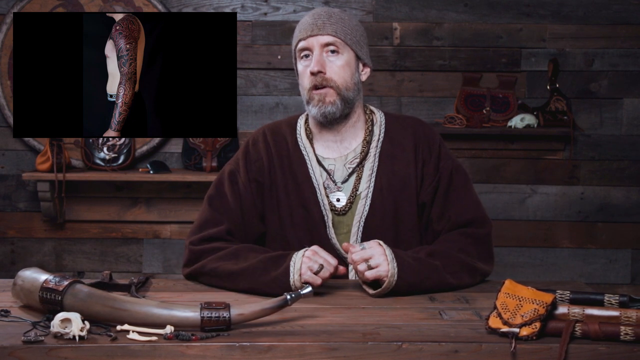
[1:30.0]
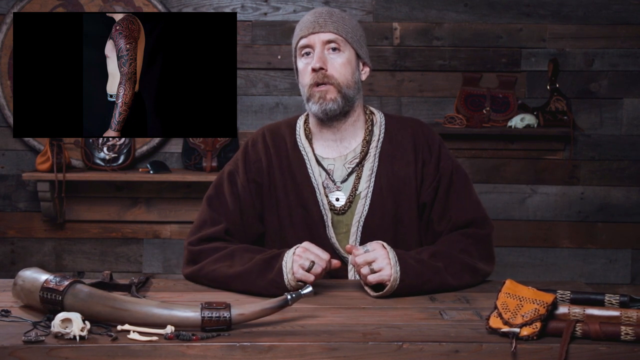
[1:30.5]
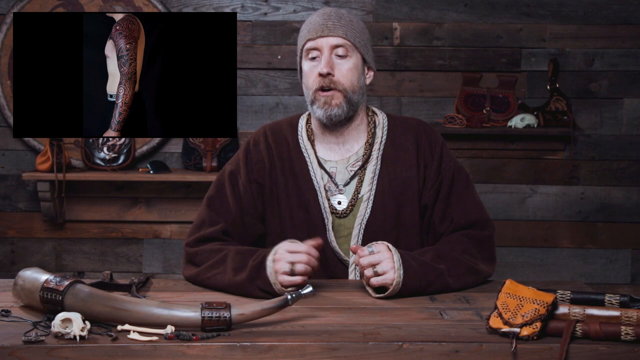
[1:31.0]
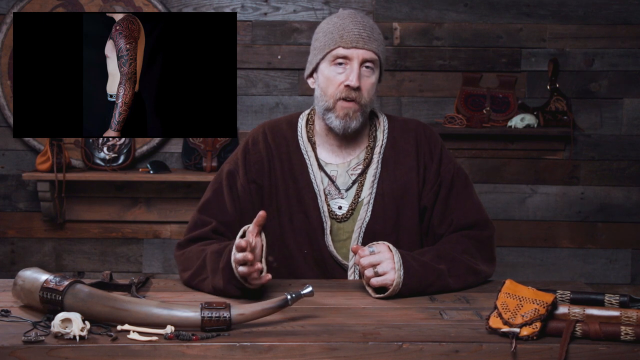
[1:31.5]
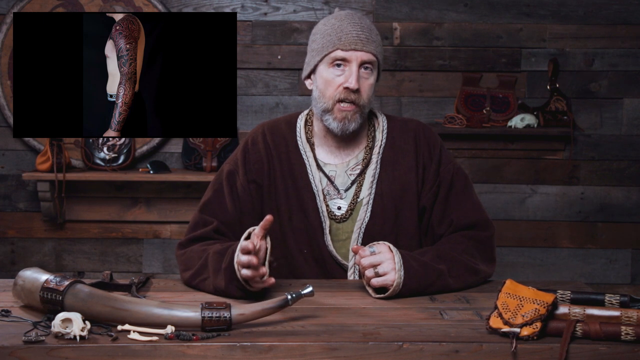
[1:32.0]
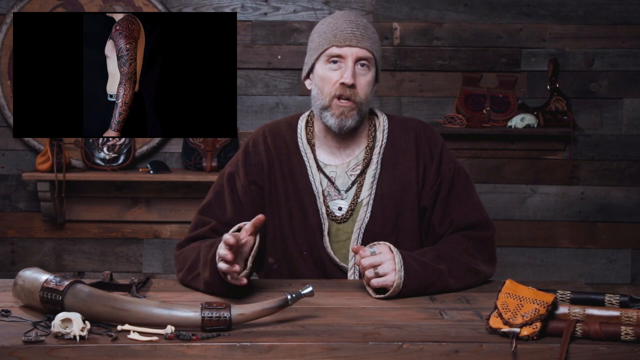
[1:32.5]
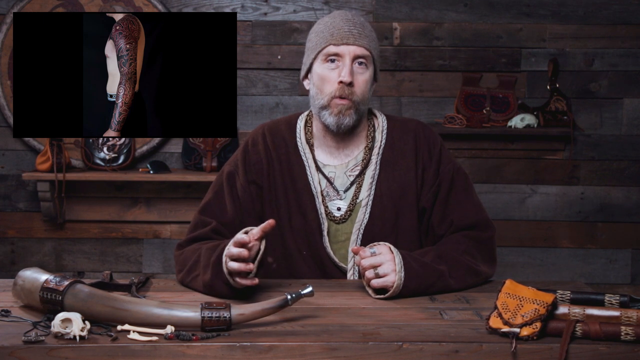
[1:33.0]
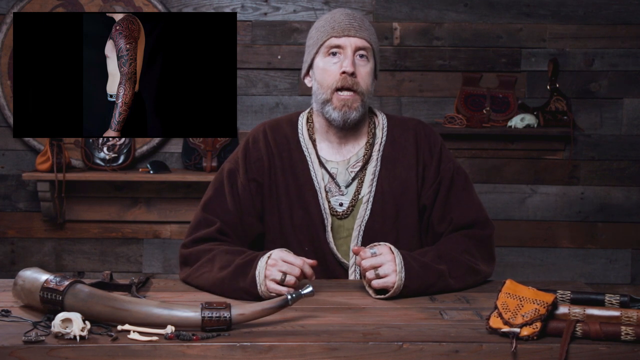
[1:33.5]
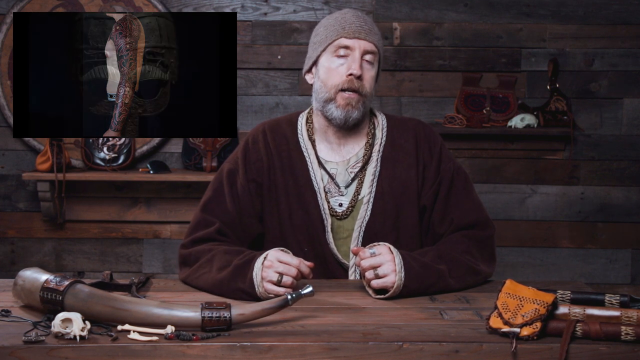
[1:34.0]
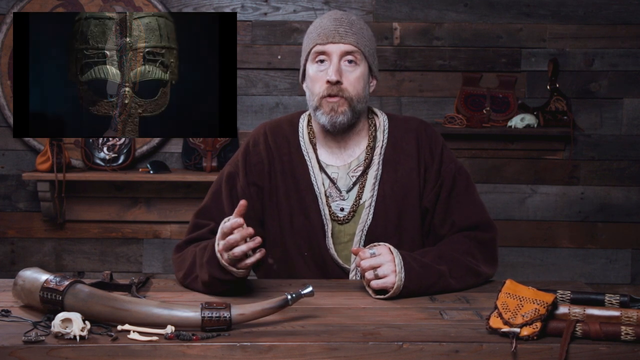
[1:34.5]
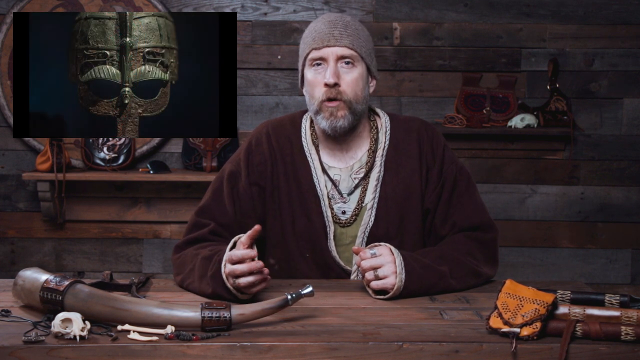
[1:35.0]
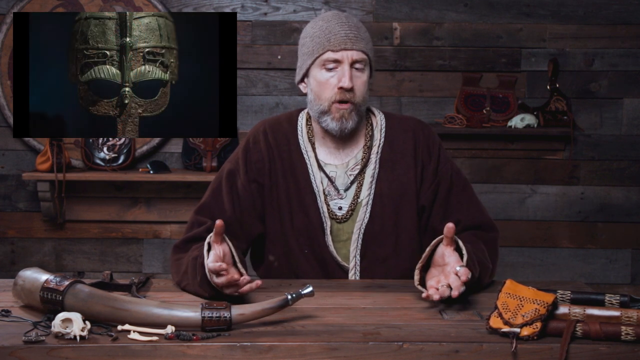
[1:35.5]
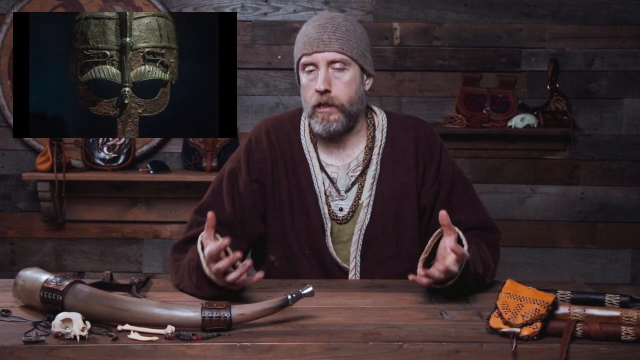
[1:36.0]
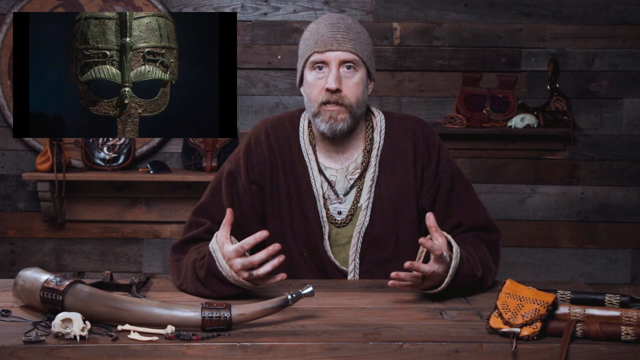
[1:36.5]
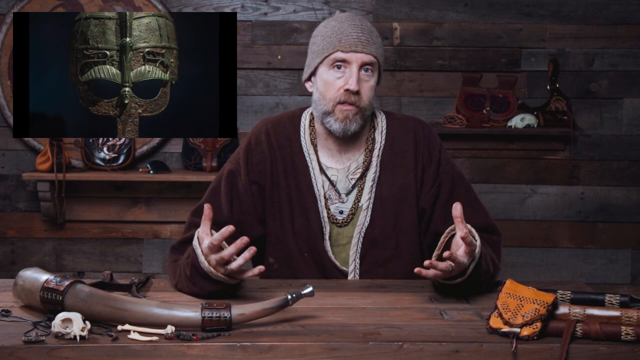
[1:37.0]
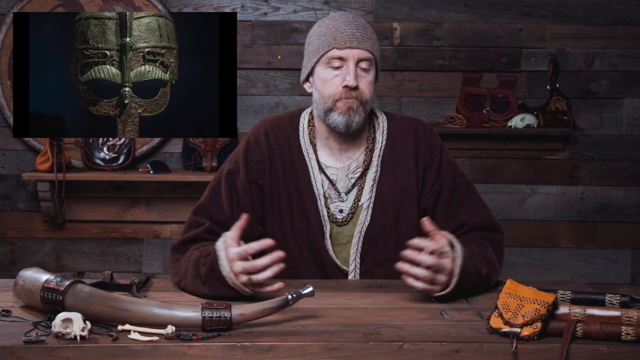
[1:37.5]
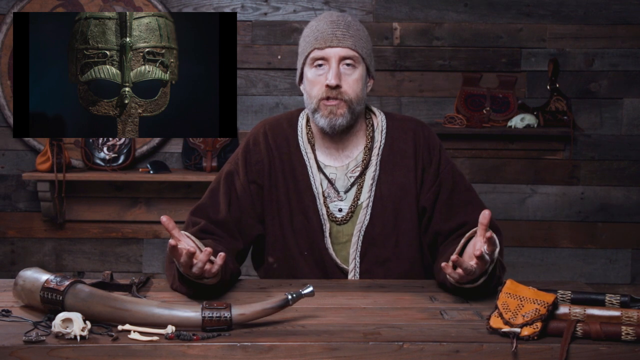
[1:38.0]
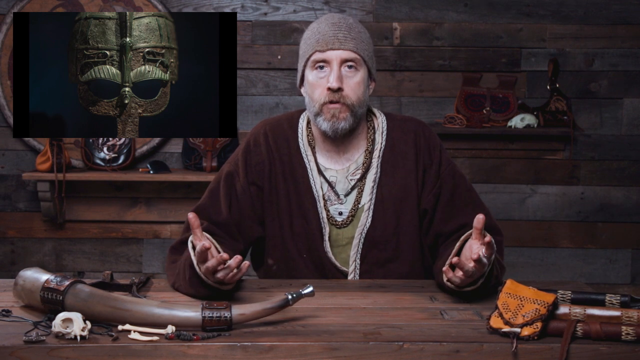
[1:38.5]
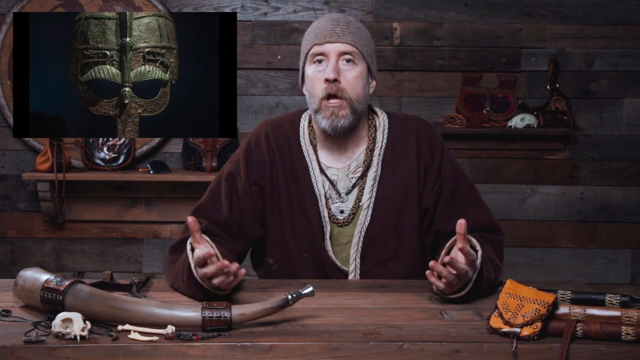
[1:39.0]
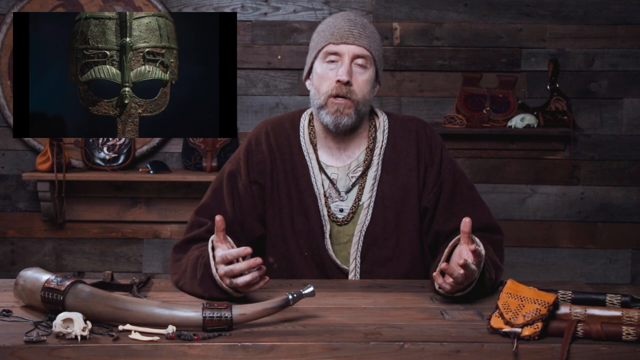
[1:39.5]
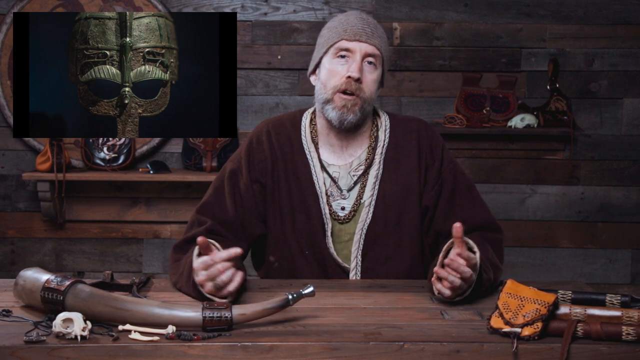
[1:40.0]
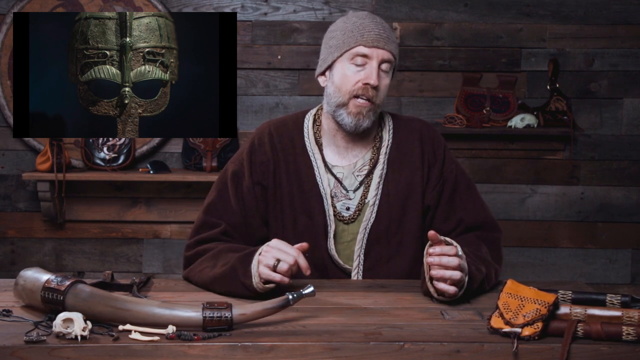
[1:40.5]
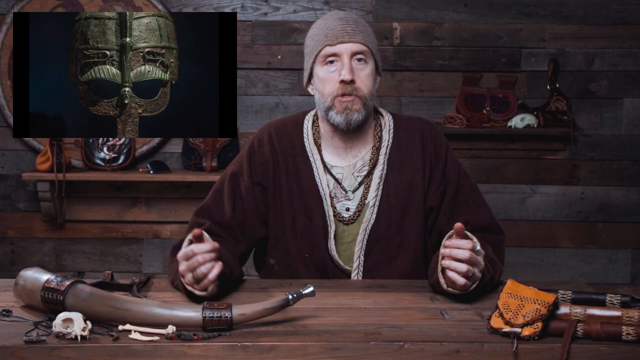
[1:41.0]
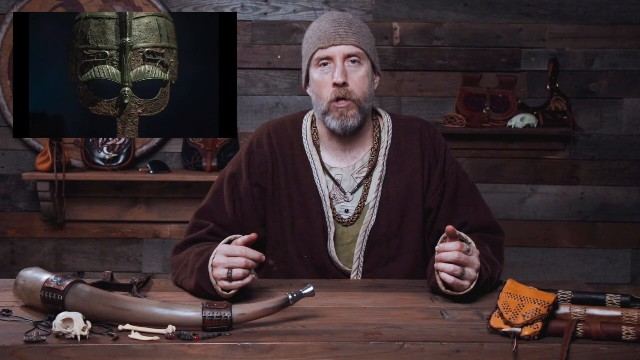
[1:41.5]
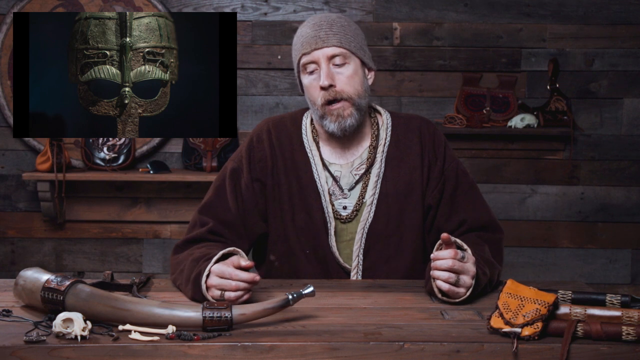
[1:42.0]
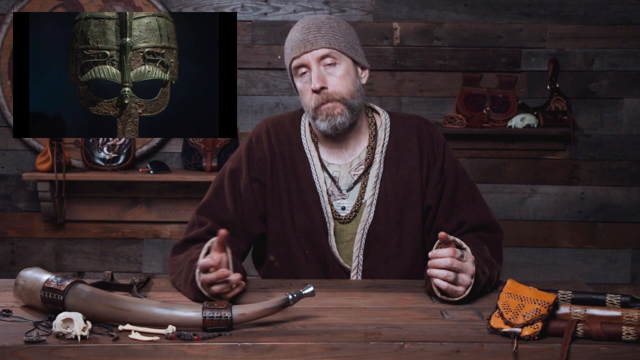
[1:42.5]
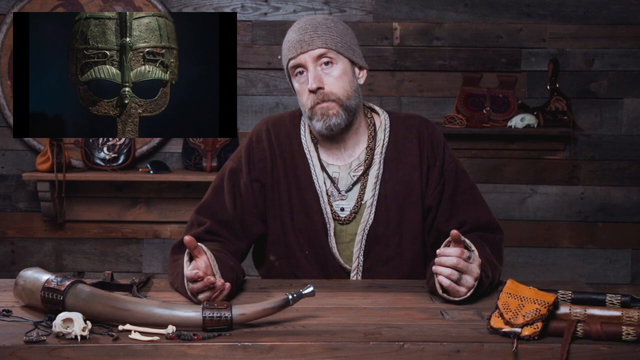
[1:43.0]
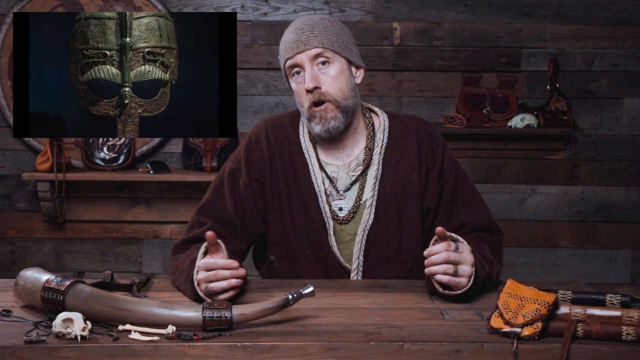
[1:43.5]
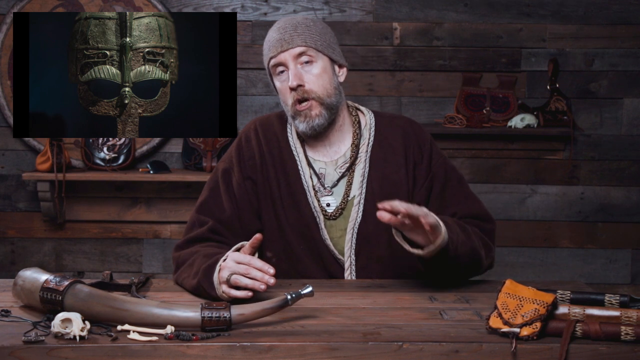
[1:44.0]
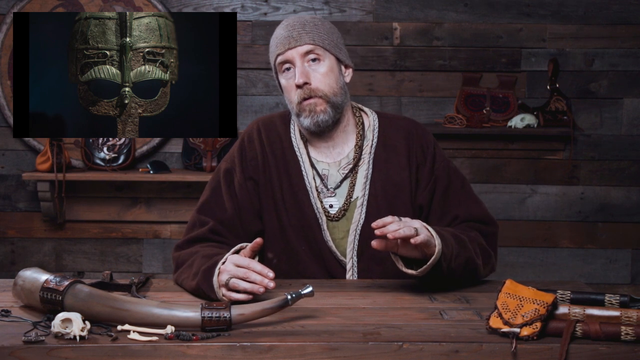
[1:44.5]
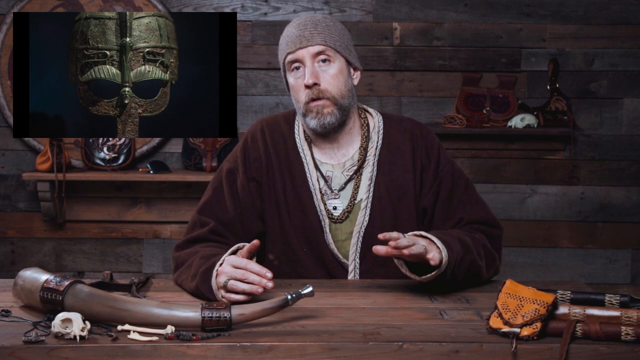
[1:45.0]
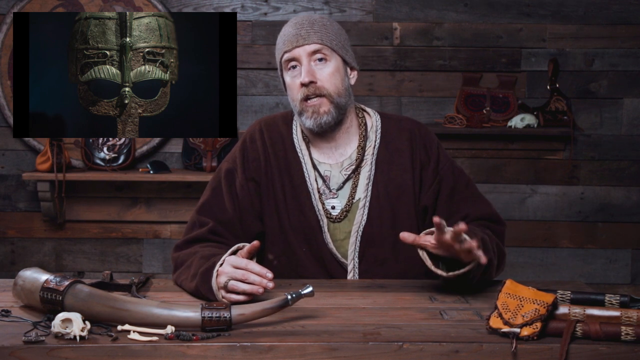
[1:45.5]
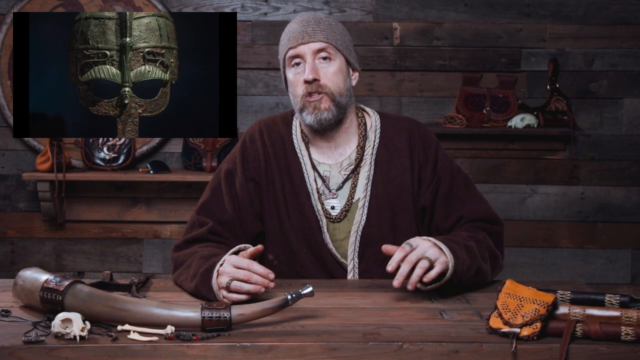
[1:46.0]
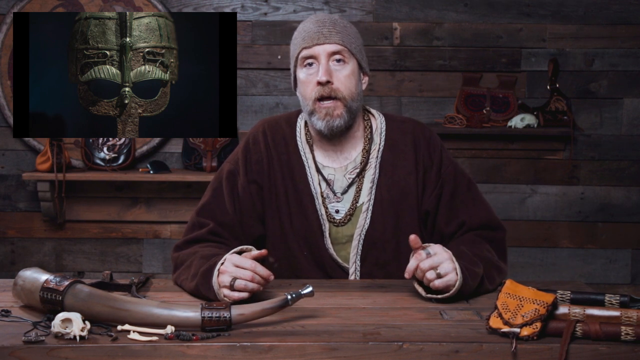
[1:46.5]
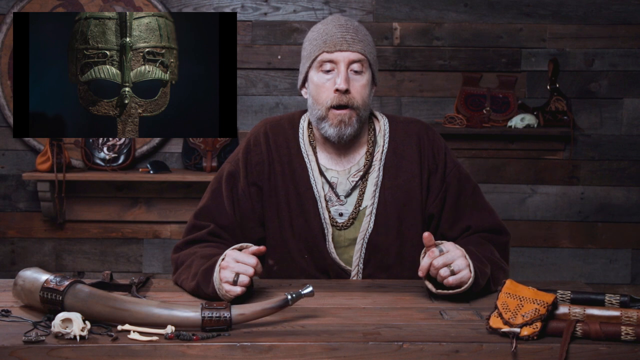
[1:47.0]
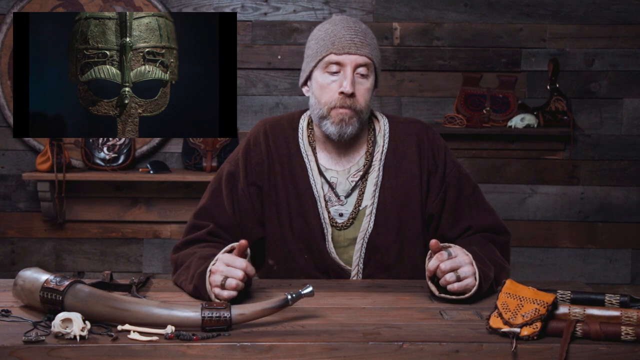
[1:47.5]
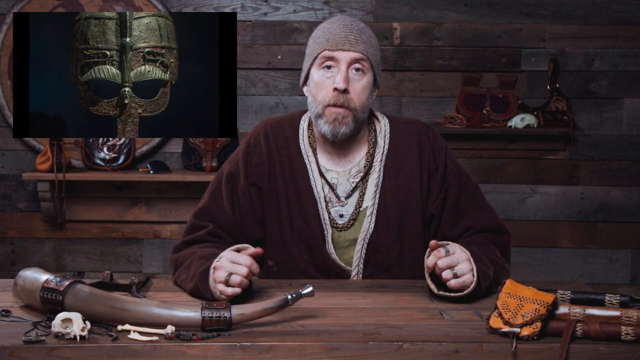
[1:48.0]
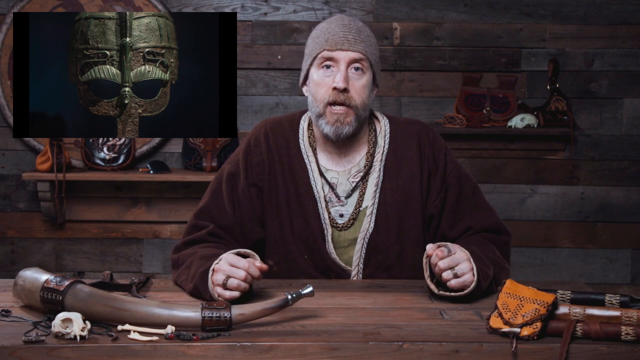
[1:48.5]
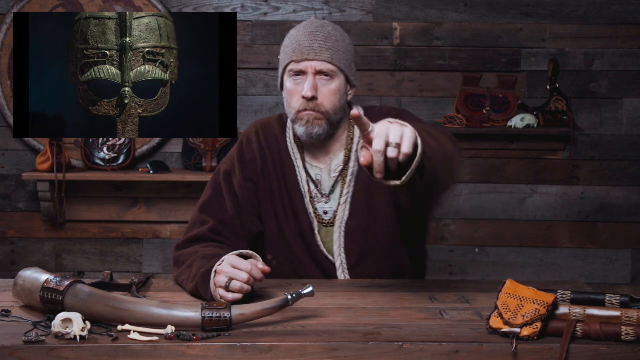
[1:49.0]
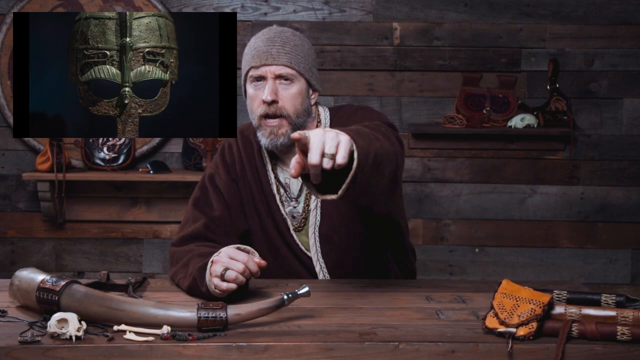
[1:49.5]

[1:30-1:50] A man sits at a desk talking to the camera, probably doing a podcast or YouTube video. The desk is wooden, made of planks of wood. On the left is a large horn, some sort of historical cultural item from Europe; to the right of the screen are a little orange bag and another black item. The background wall is made of planks of wood, the same as the desk, with a shelf on either side of him holding bags with cultural patterns on them. An image box shows a picture of a shirtless man with a tattoo on his left arm and shoulder, standing on his side. The man at the desk wears a grey beanie, a maroon robe, an elaborate necklace and rings on many of his fingers, with his elbows on the table. He talks to the camera, moving his right hand slowly, and occasionally looks away from the camera and then returns. The image in the top left corner changes to what is almost a battle helmet, or a mask, of sort of a greenish colour and made of metal, with coverings for the forehead and the eyes. The man continues to motion his arms slightly, raising his eyebrows as he talks, while the helmet image remains in the top left corner. Eventually he points straight at the camera with the index finger of his left hand.